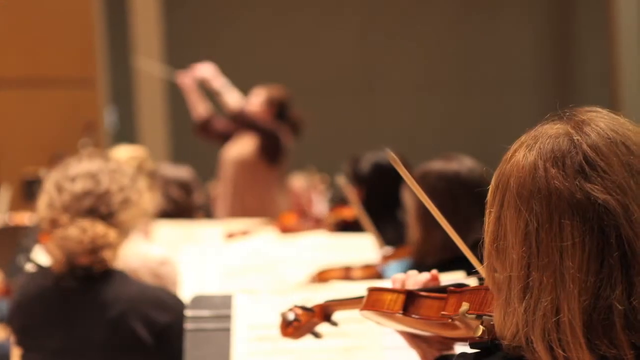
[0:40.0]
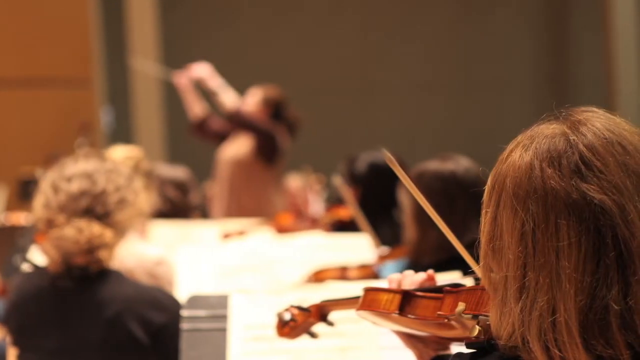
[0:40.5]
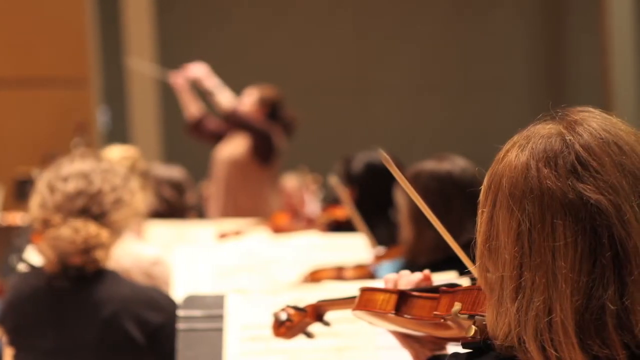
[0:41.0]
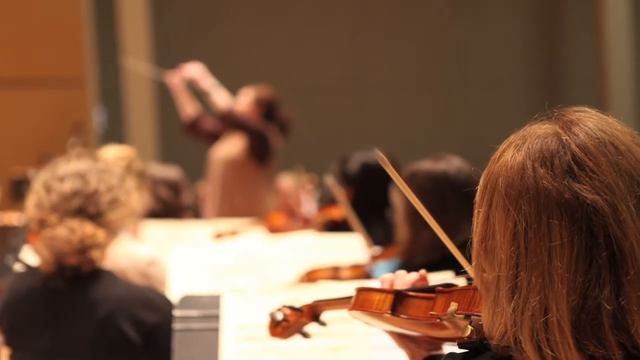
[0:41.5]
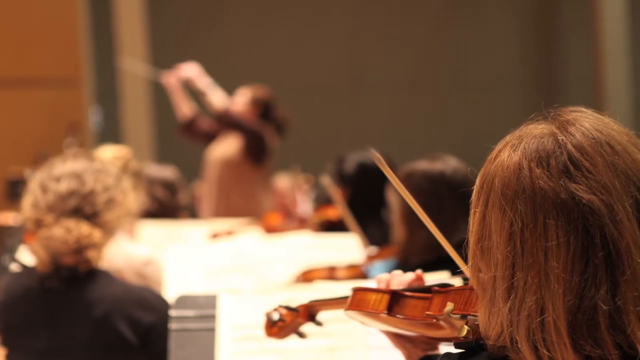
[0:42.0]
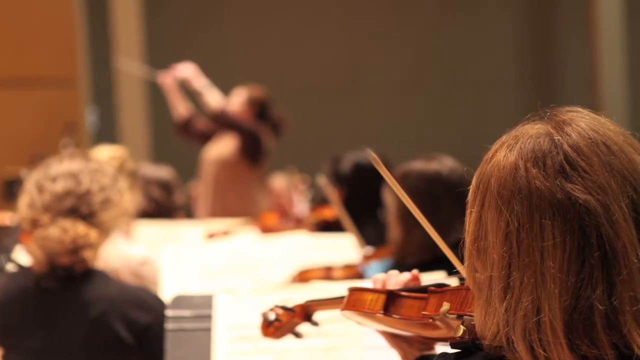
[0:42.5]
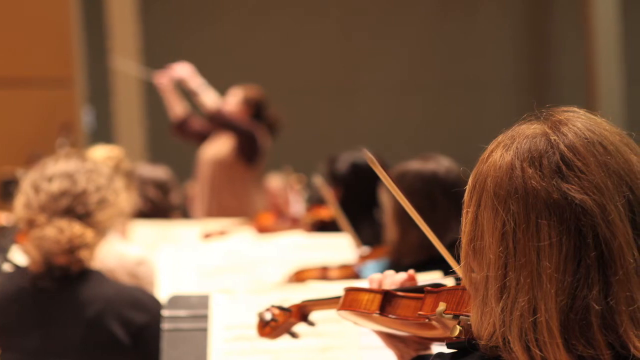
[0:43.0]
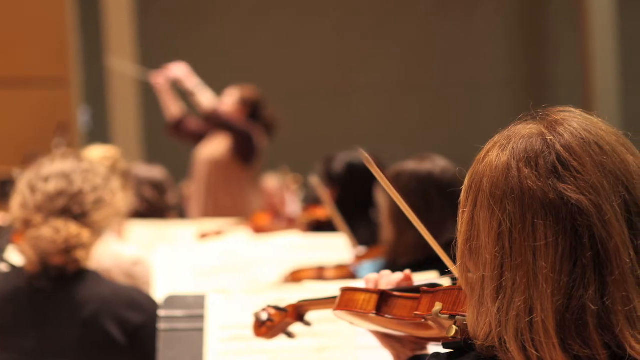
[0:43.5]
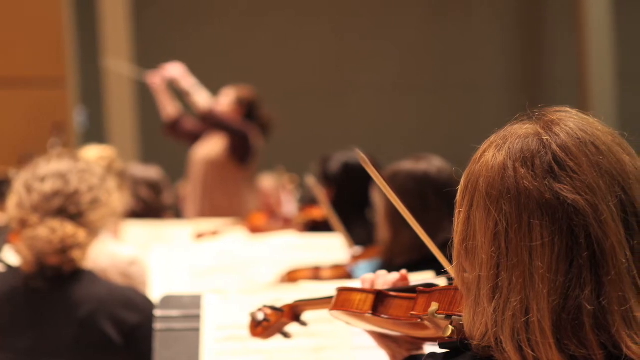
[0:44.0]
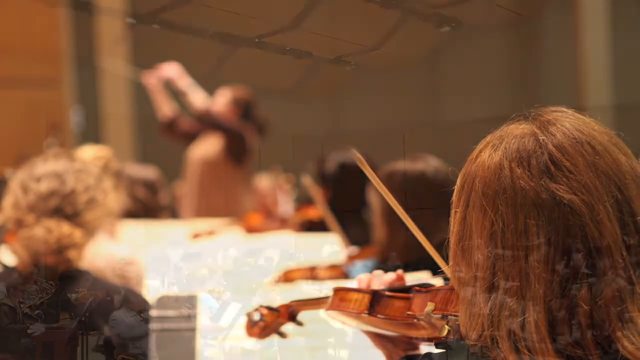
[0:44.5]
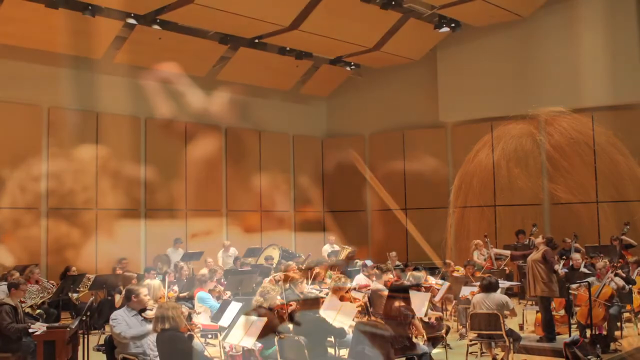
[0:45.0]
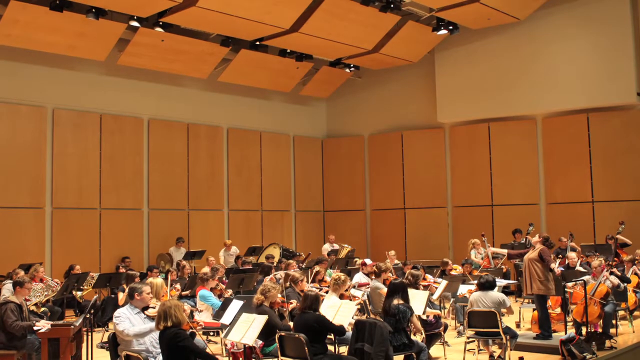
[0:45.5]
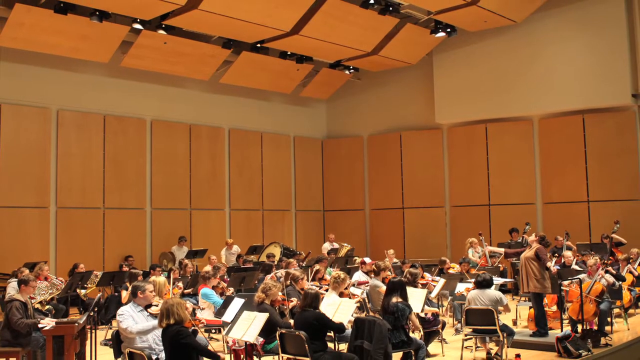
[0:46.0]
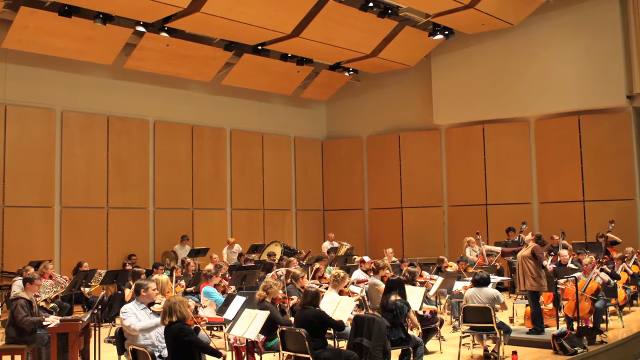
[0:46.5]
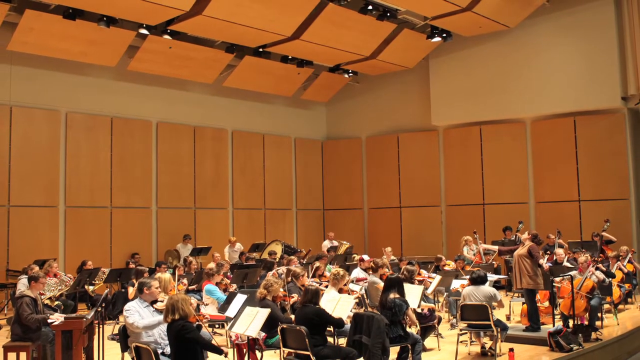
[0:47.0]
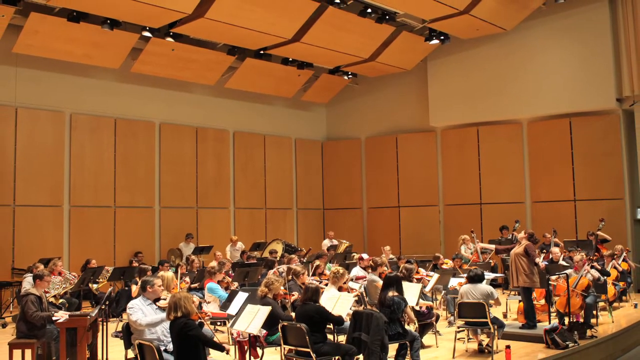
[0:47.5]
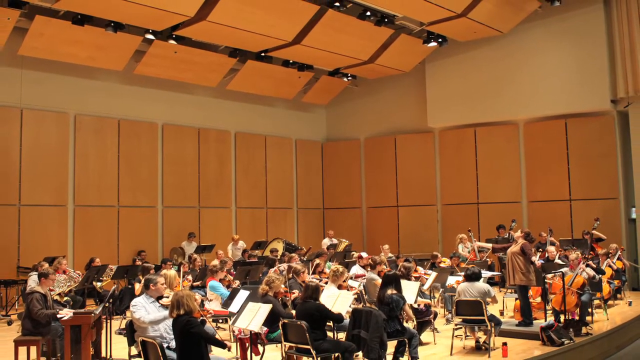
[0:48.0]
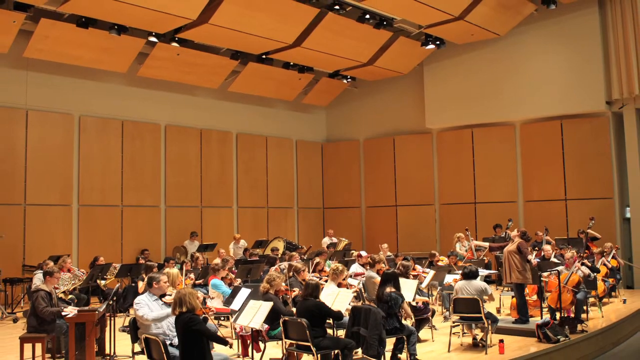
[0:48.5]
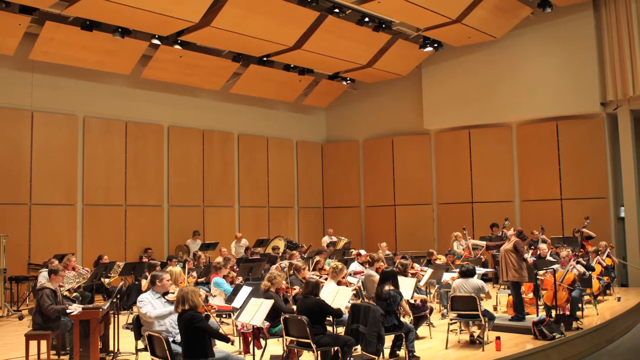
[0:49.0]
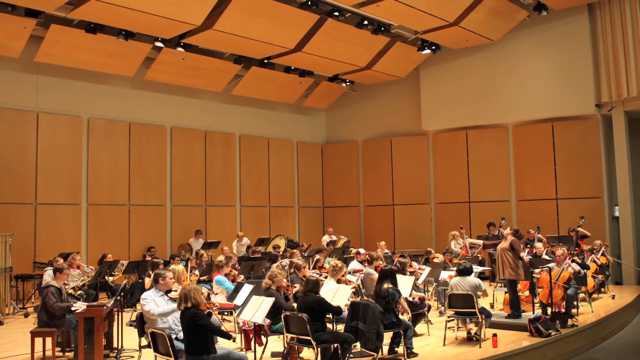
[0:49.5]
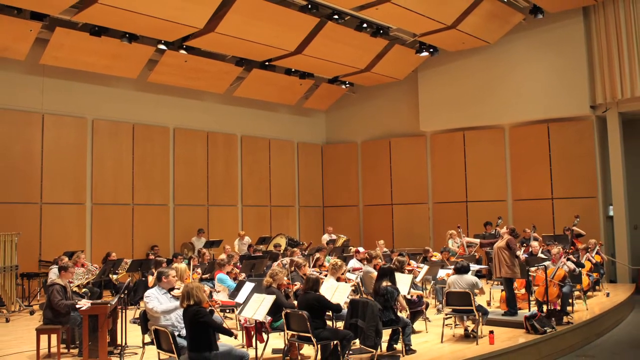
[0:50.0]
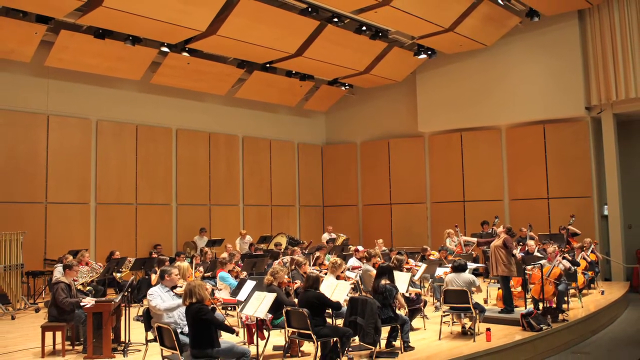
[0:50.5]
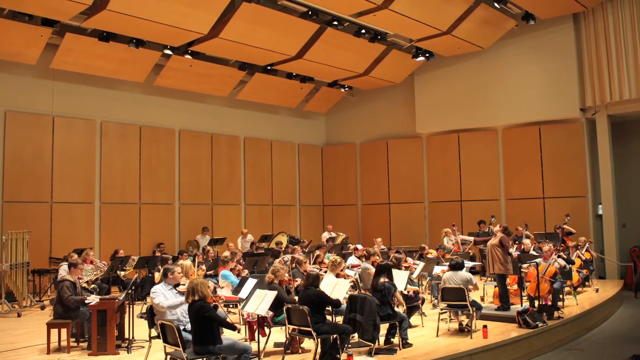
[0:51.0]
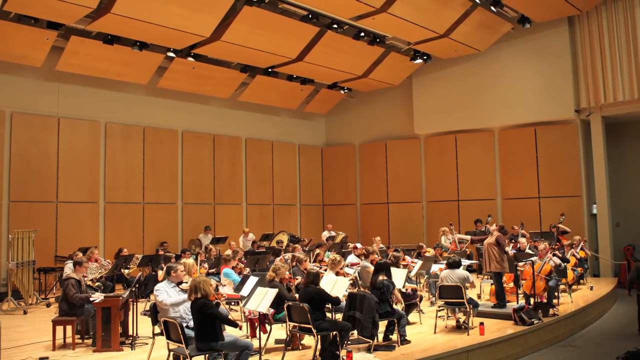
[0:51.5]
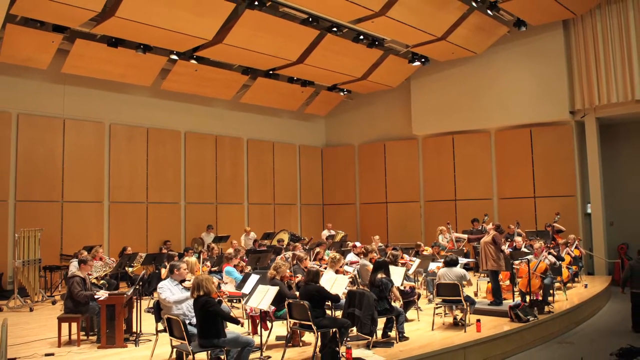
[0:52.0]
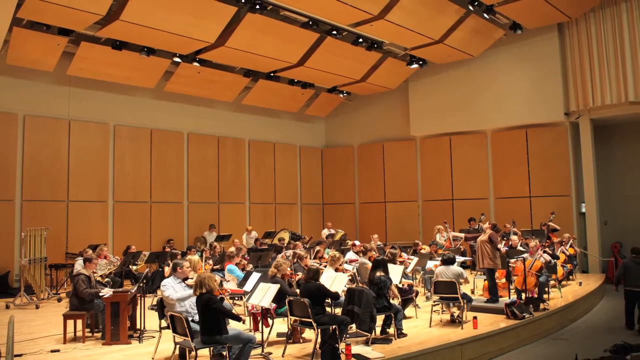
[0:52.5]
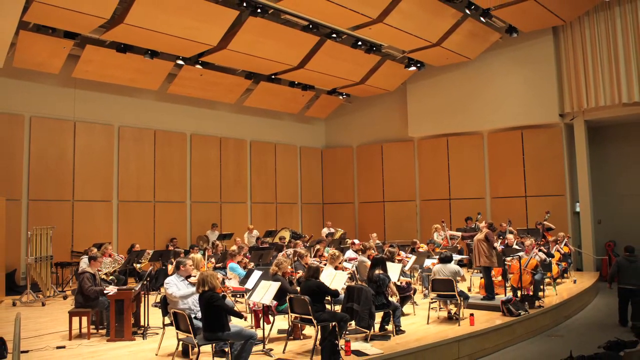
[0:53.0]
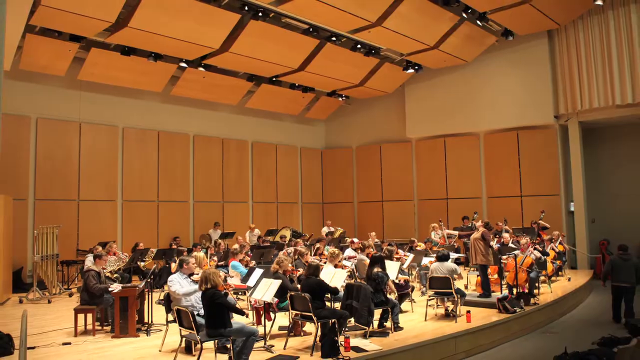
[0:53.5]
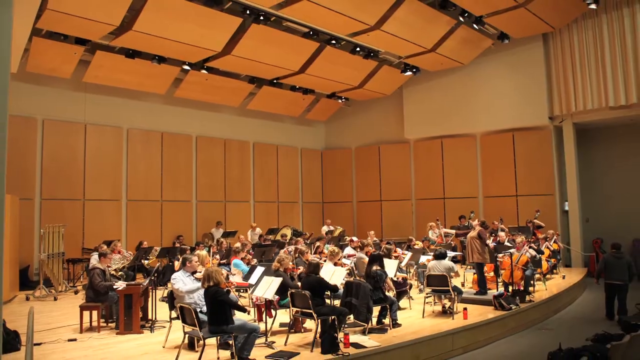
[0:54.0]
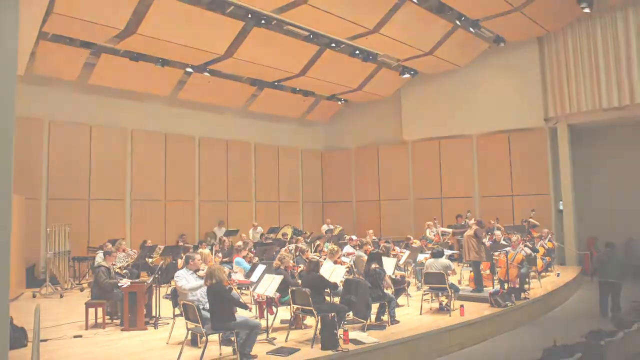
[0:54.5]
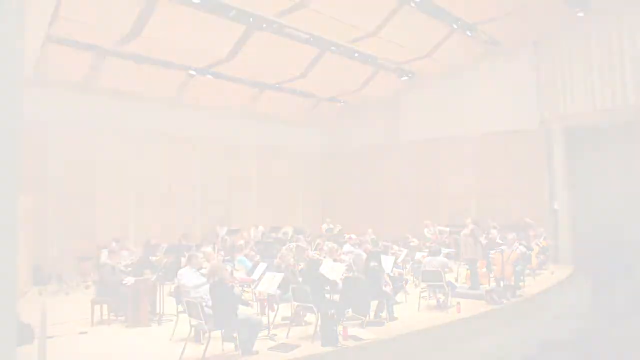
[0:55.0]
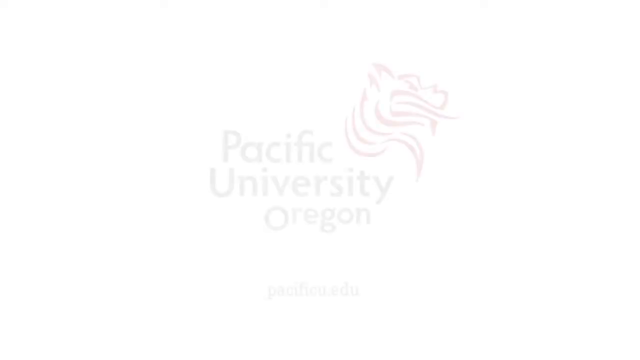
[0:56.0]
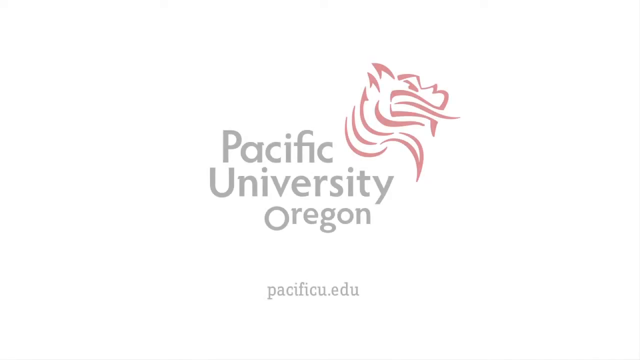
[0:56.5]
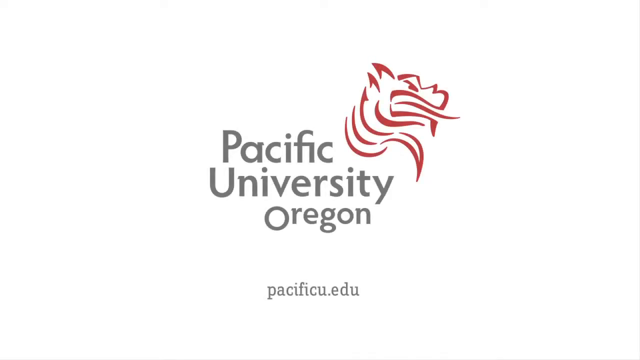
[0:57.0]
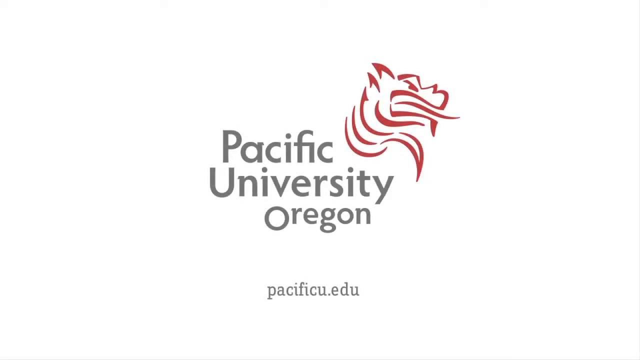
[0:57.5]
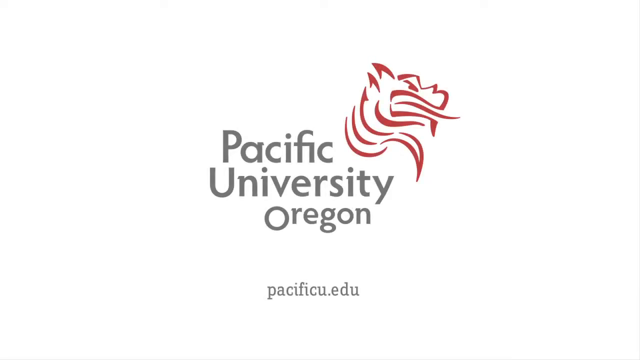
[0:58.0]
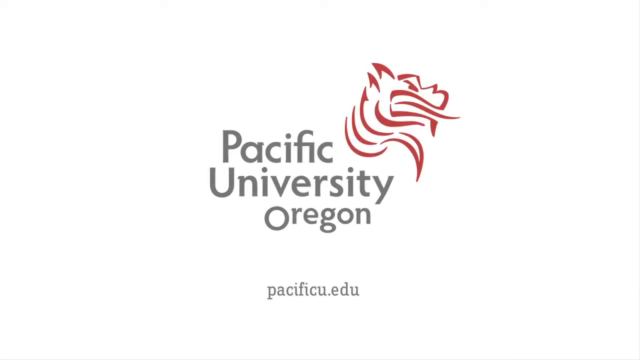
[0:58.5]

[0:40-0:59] A series of still images shows a large band inside a concert hall setting, playing stringed instruments, brass instruments and keyboards. The orchestra is made up of dozens of people, most playing different types of stringed instruments with bows. The walls are made of brown panels, and the ceiling is made of panels hanging down, with lights between them lighting the area where the band plays. On the left the band plays on a stage, and on the right is a small auditorium where people could watch the performances. Toward the end a logo appears reading "Pacific University, Oregon, Pacific.edu".